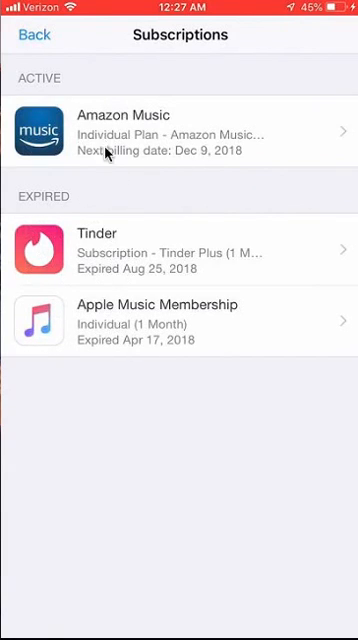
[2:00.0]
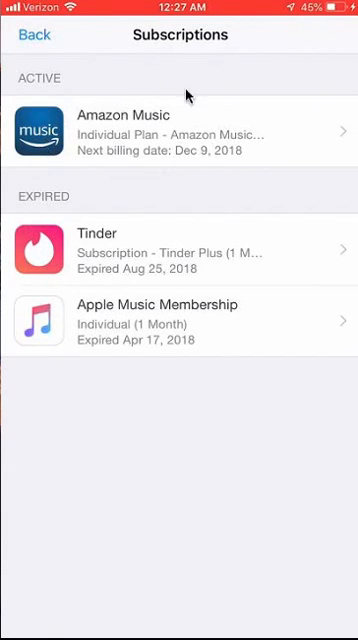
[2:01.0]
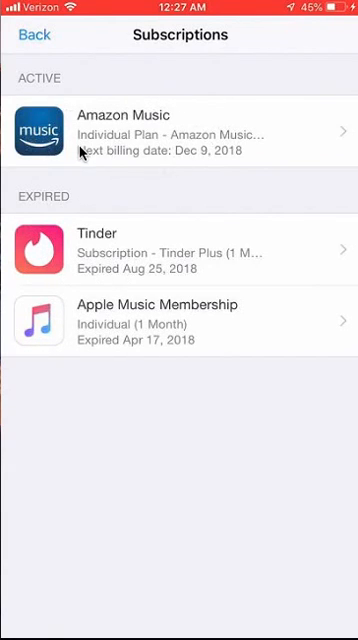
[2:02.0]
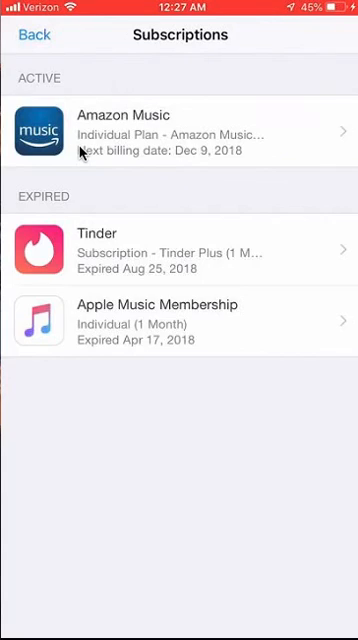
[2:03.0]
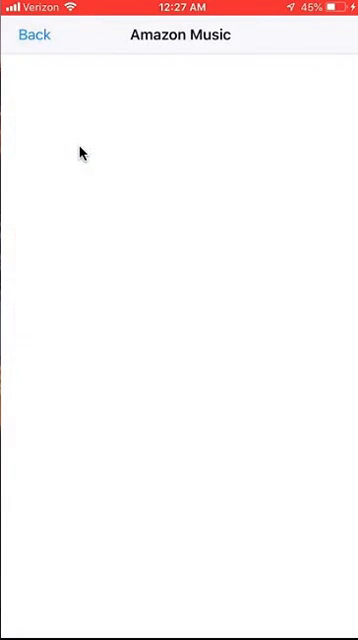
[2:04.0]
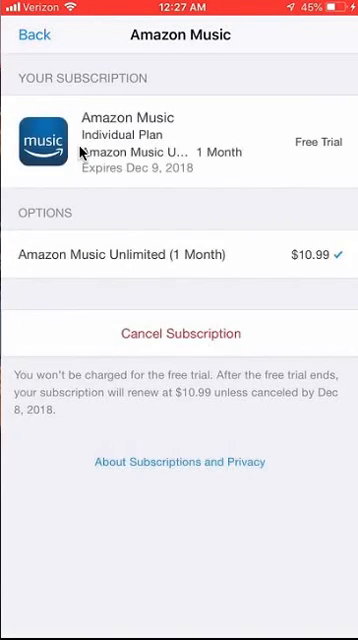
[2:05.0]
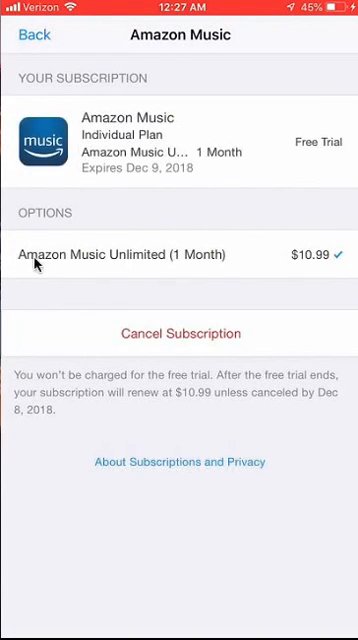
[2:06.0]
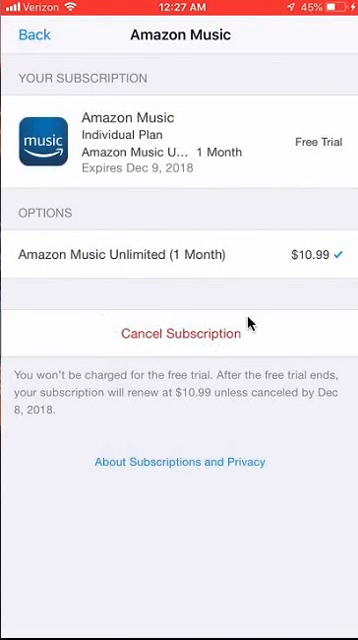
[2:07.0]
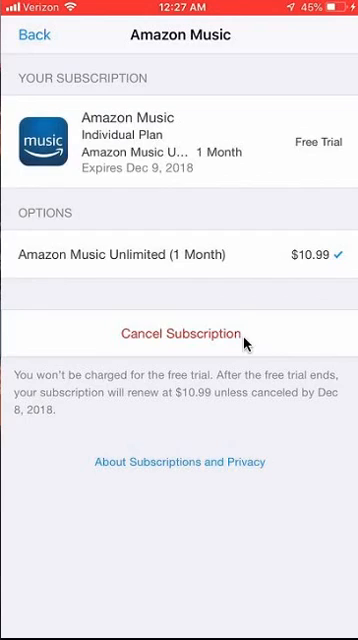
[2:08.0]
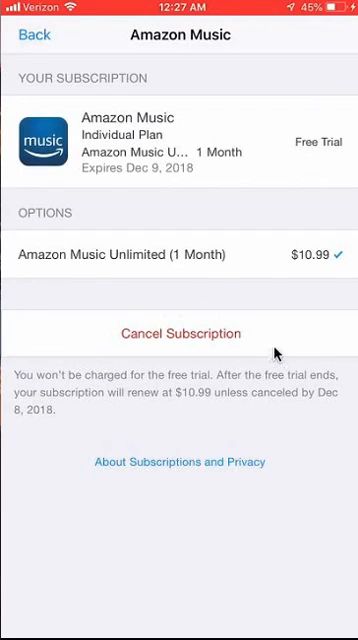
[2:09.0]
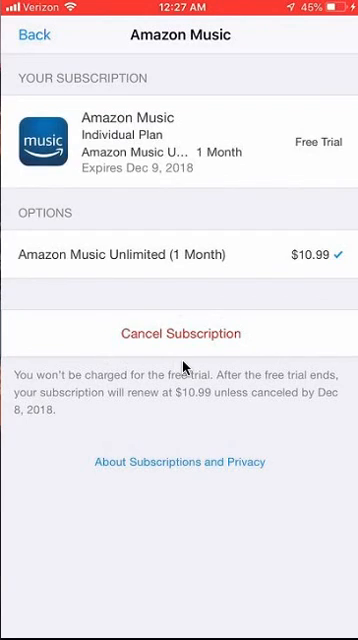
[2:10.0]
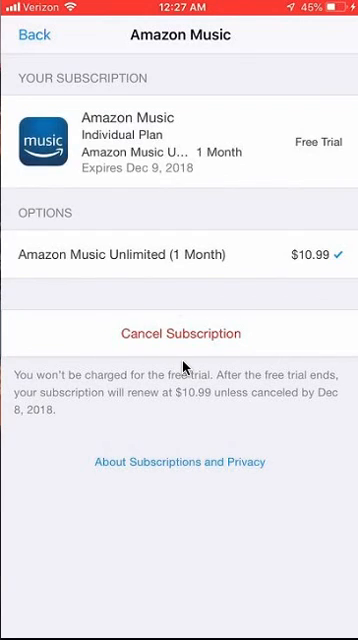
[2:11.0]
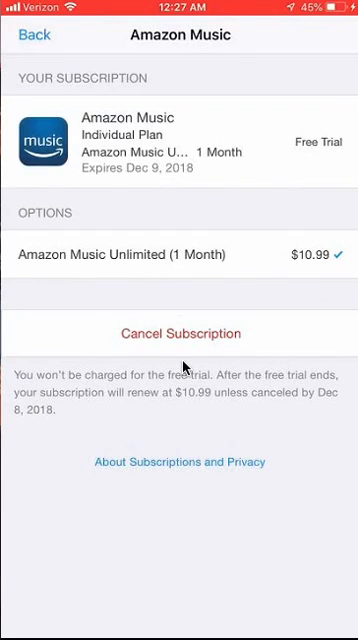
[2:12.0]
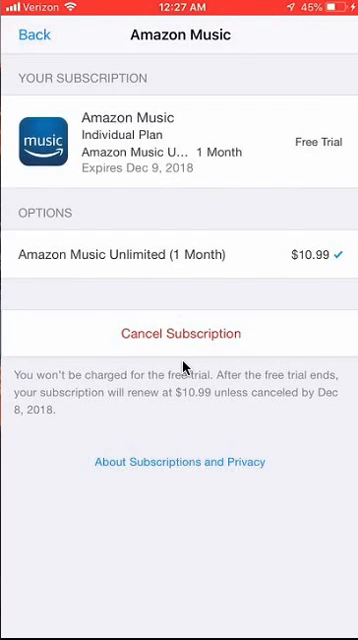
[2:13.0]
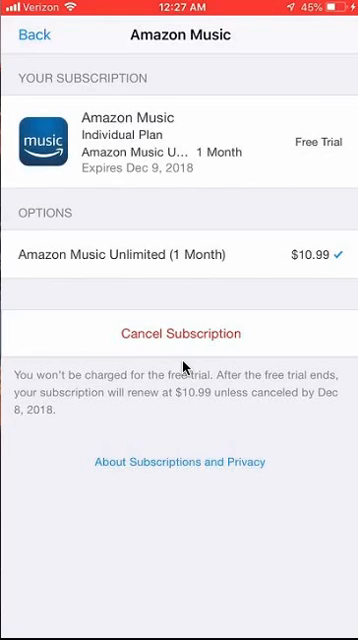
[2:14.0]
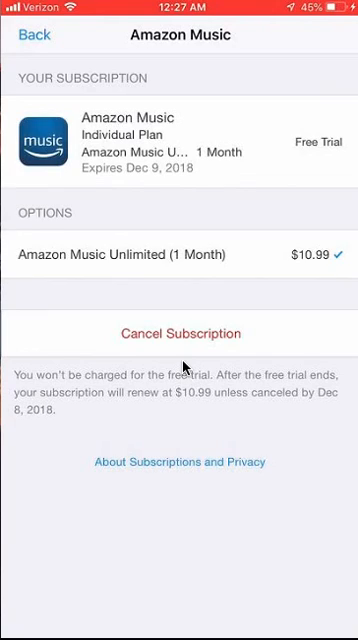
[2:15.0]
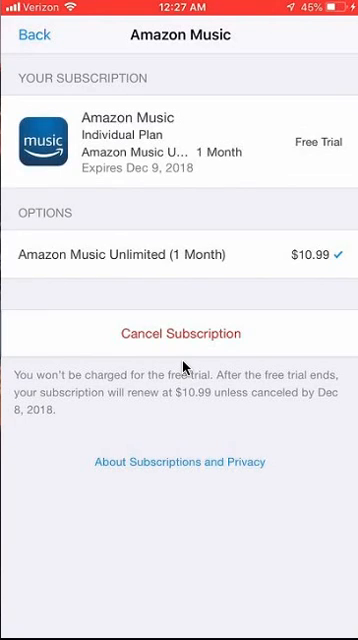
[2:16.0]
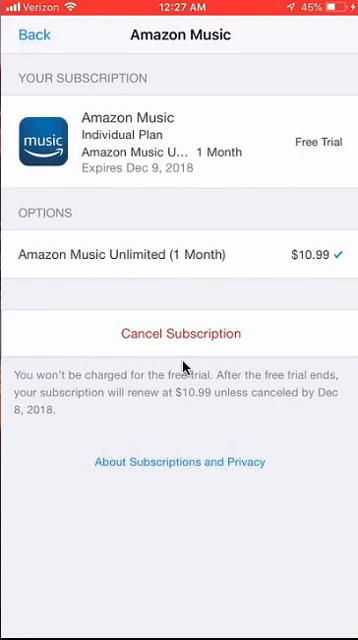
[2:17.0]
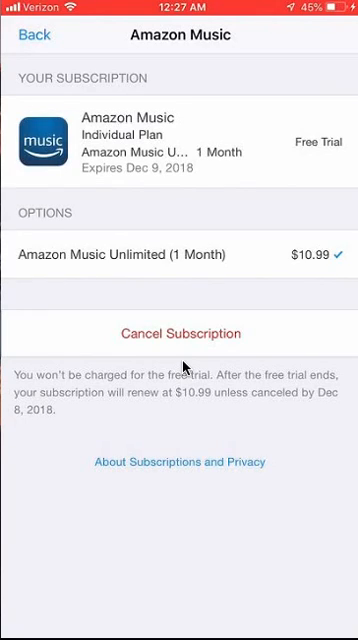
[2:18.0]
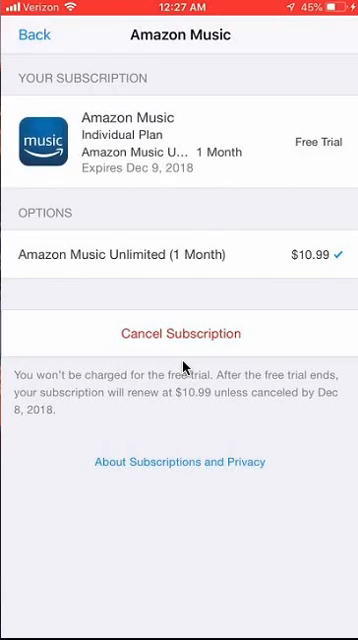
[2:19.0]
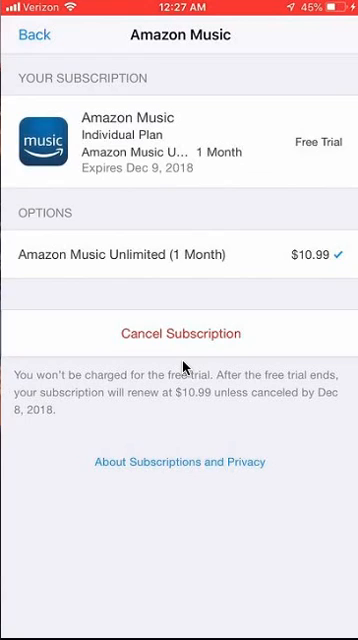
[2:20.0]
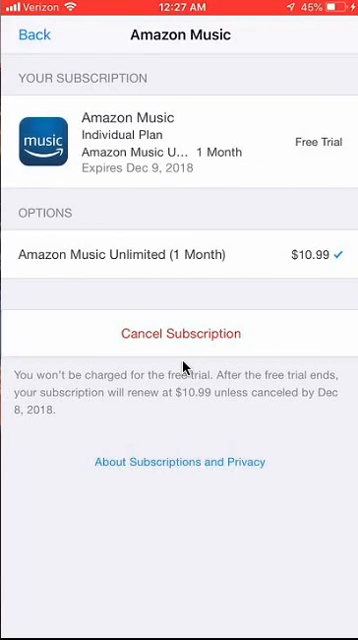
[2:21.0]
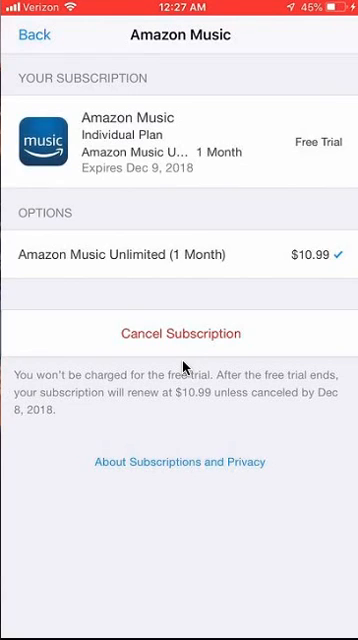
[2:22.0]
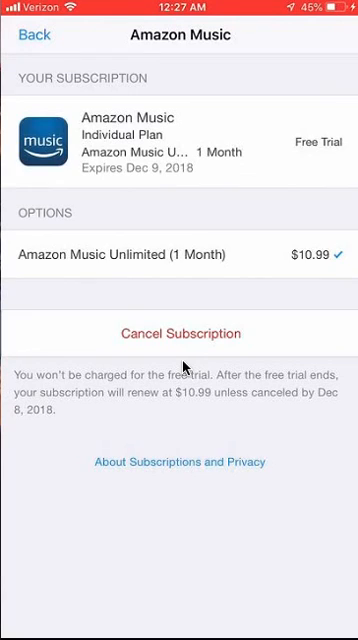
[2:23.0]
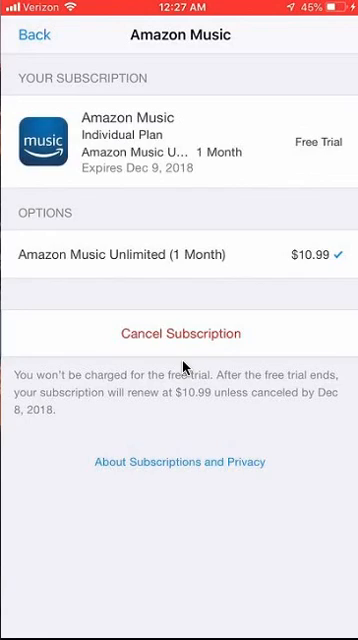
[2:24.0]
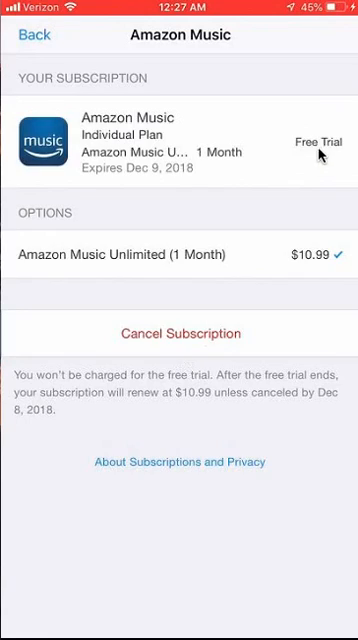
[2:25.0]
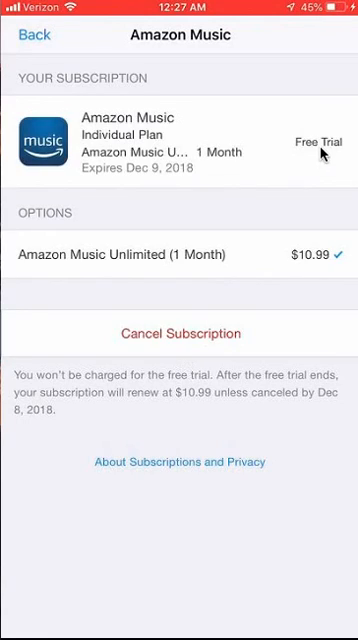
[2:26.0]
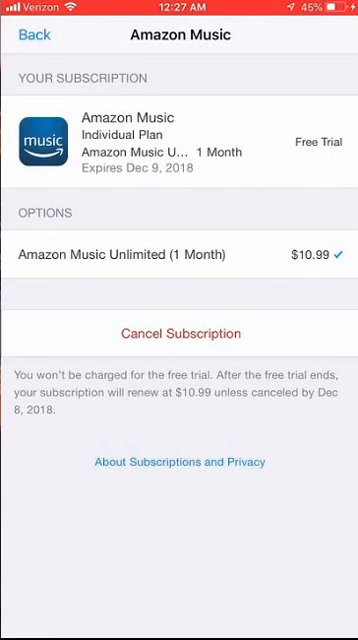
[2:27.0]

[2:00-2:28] The person is now in the subscriptions portion of the settings. The active section lists an Amazon Music individual plan with a next billing date of December 9, 2018. Below that is an expired section listing a Tinder Plus subscription that expired August 25th, 2018, and an Apple Music individual one-month membership that expired in April 2018. The person hovers over Amazon Music and clicks into it, which shows options including Amazon Music Unlimited, one month, 10.99. Below that is the cancel subscription section, which they hover over. Further text says the subscription will renew at 10.99 unless canceled by December 2018. The person stays on this page for some time without doing anything, staying next to the cancel subscription portion, and then moves the mouse up the screen.